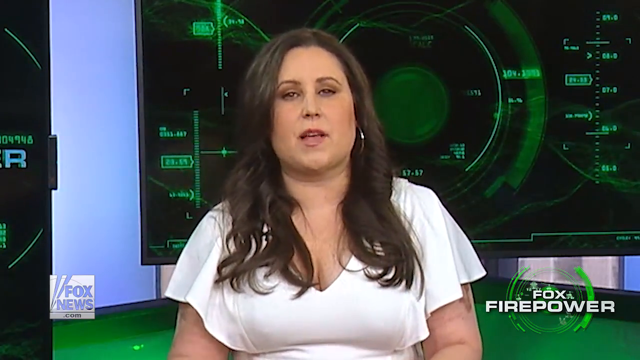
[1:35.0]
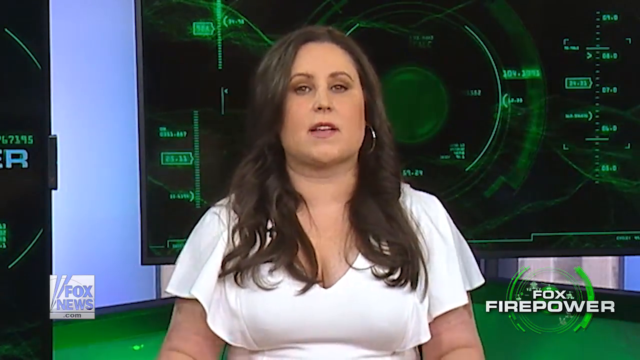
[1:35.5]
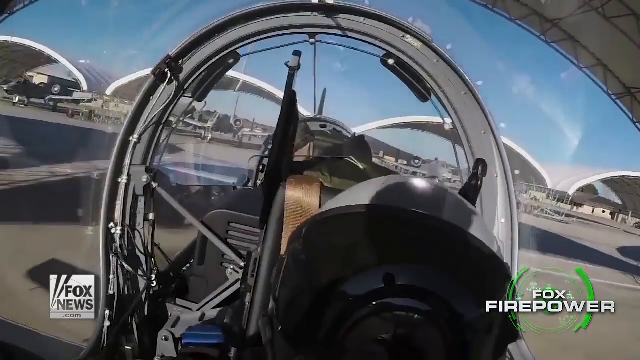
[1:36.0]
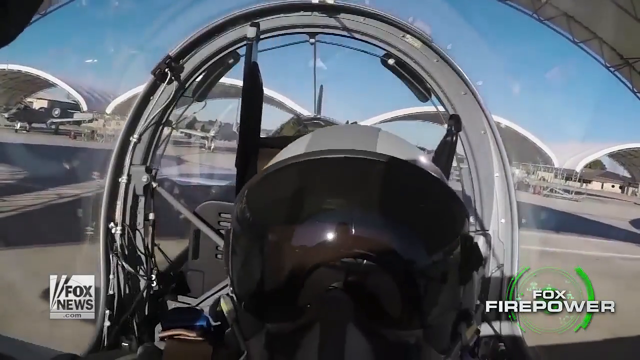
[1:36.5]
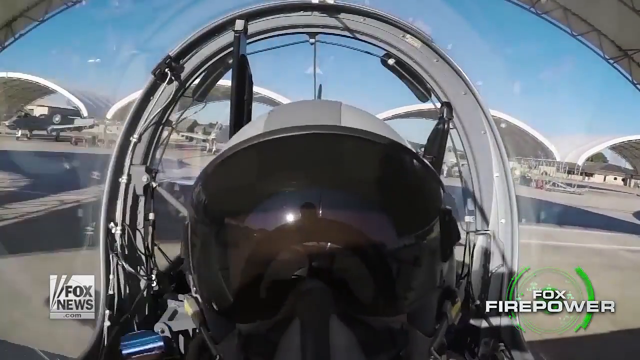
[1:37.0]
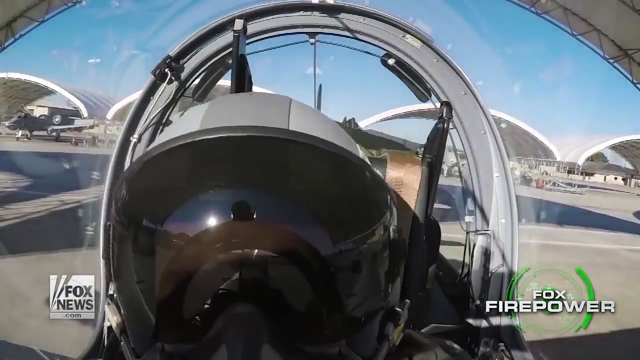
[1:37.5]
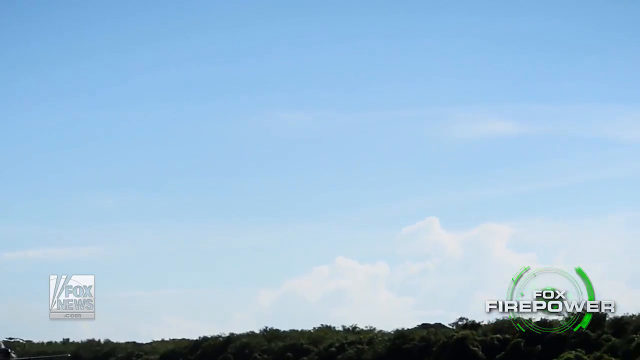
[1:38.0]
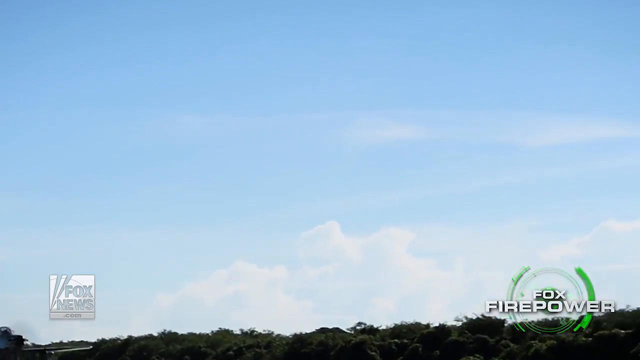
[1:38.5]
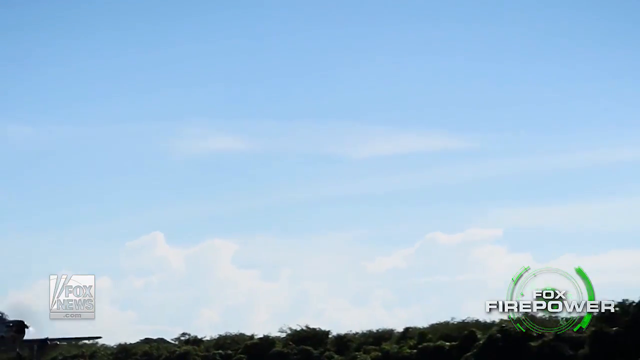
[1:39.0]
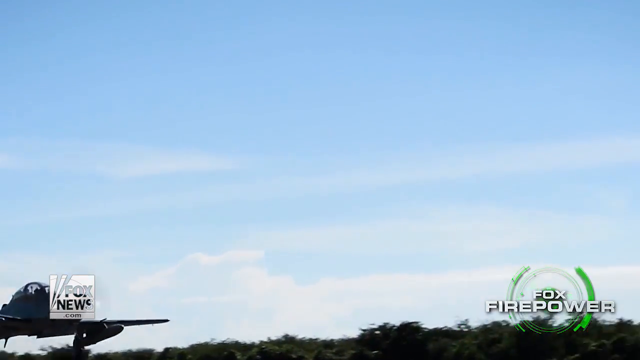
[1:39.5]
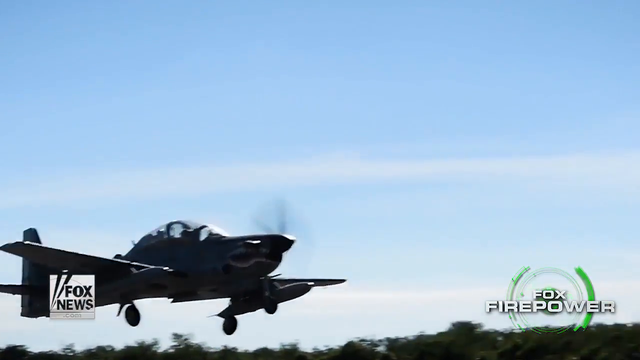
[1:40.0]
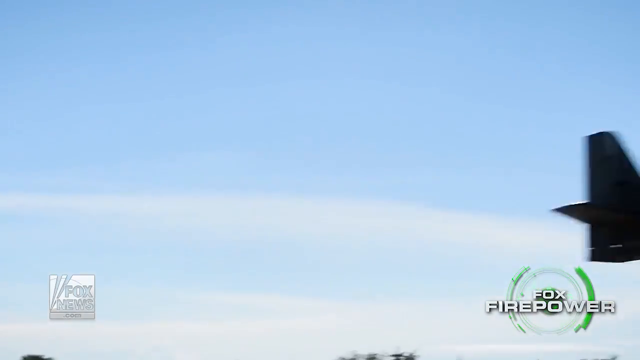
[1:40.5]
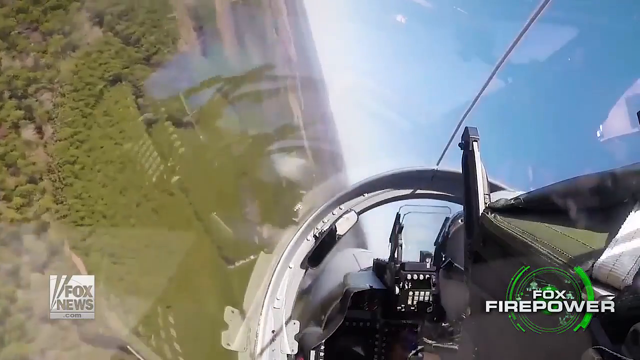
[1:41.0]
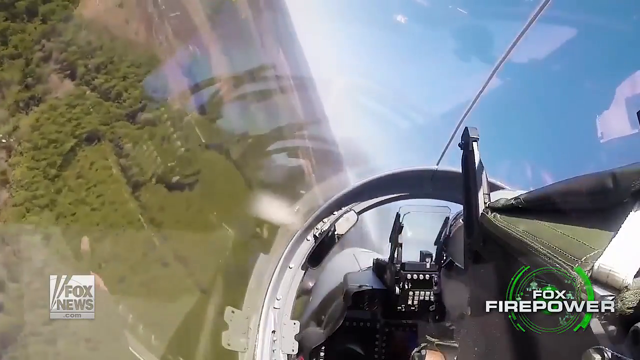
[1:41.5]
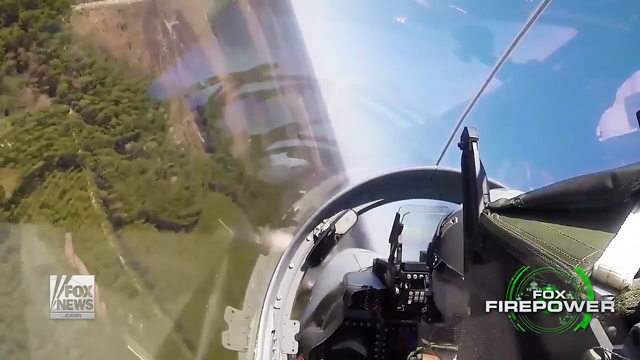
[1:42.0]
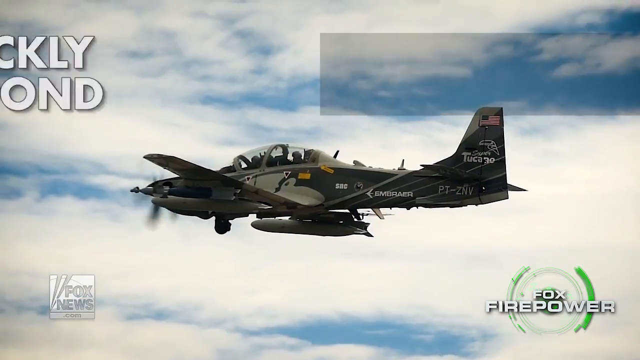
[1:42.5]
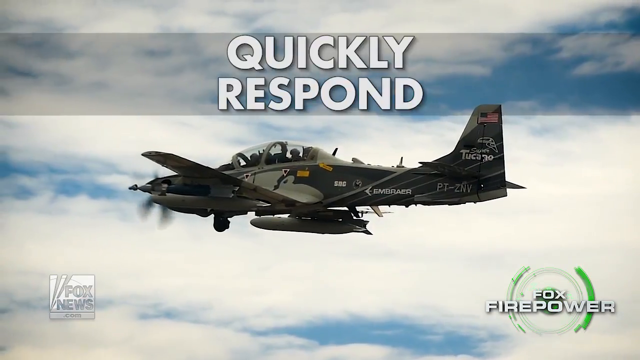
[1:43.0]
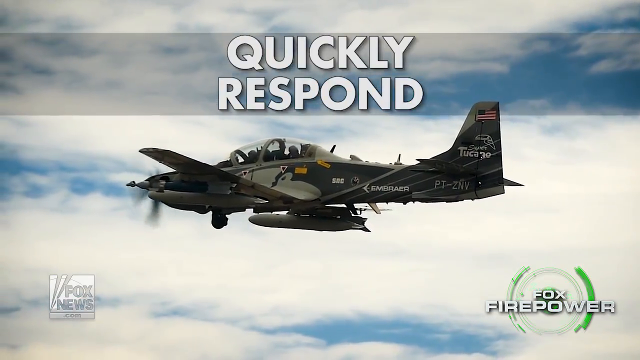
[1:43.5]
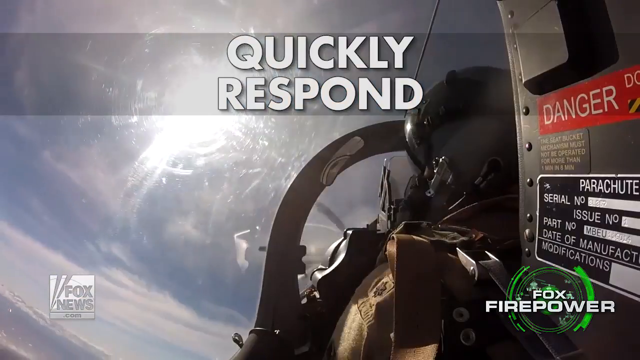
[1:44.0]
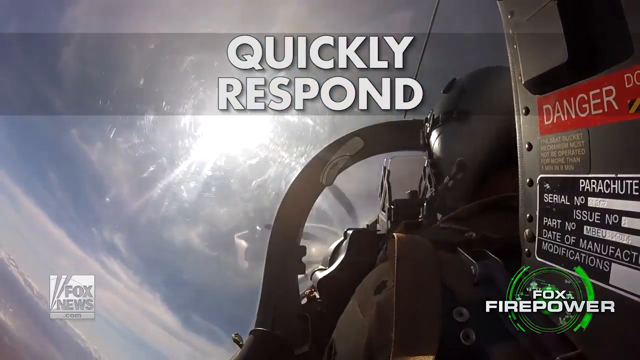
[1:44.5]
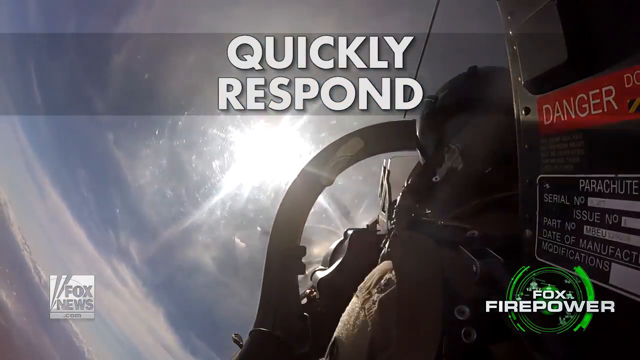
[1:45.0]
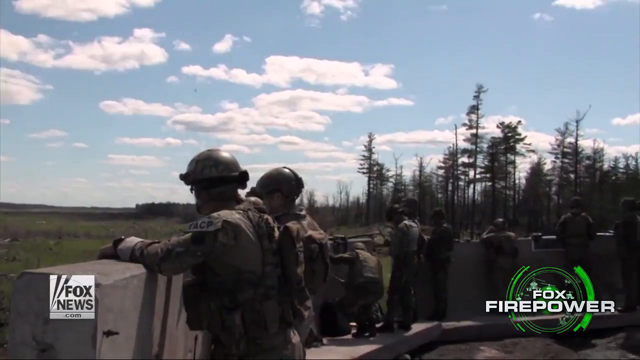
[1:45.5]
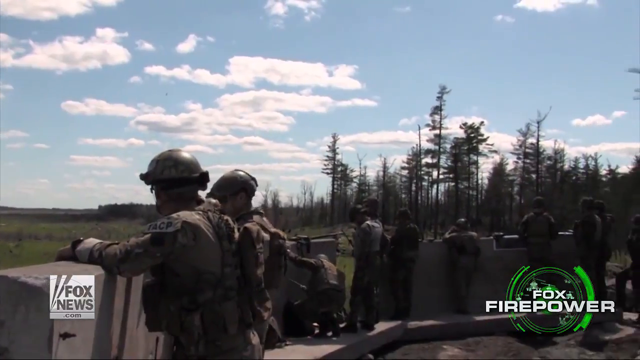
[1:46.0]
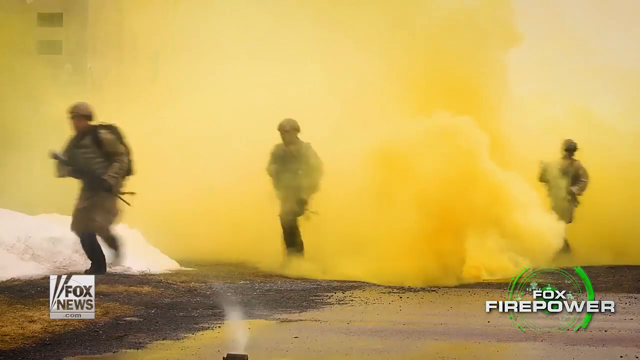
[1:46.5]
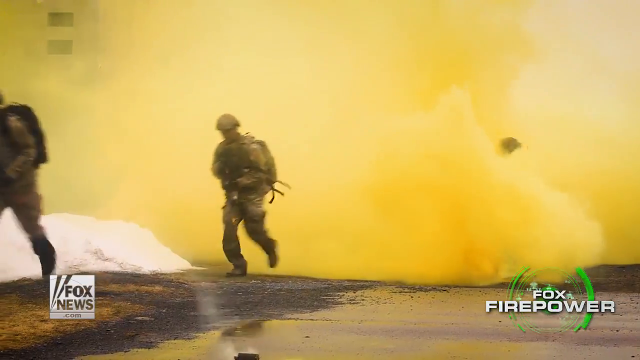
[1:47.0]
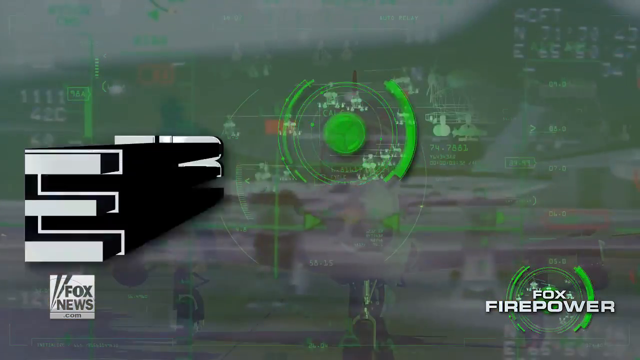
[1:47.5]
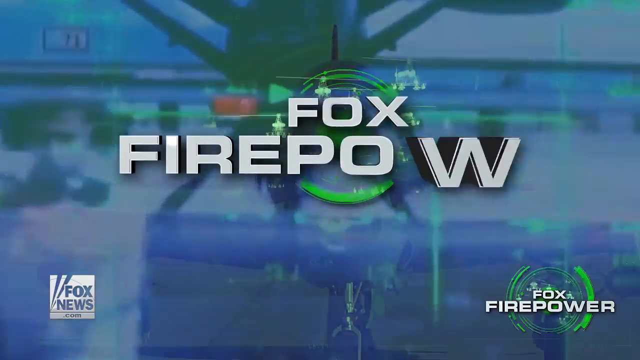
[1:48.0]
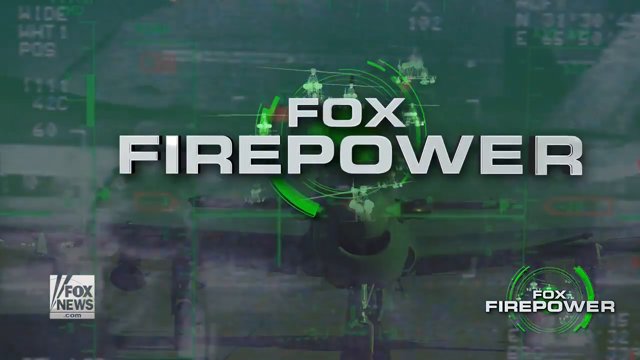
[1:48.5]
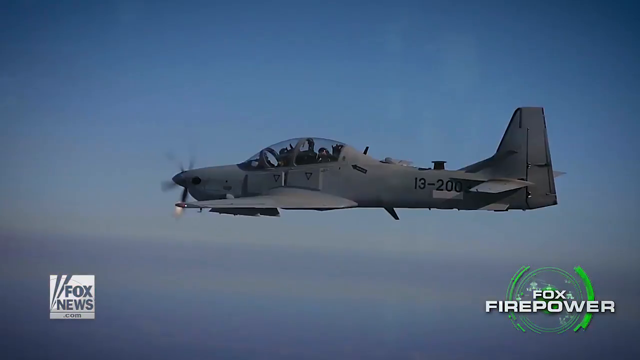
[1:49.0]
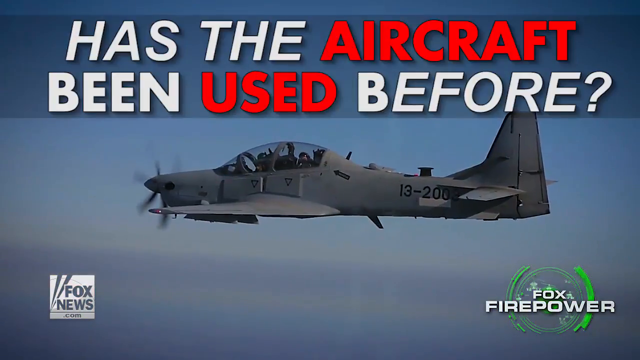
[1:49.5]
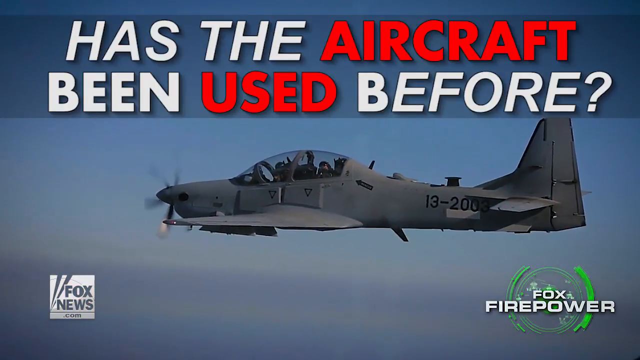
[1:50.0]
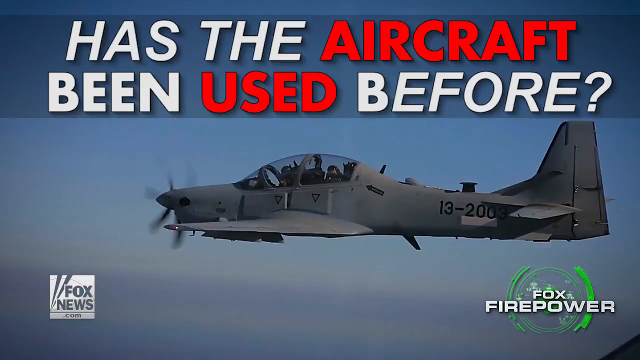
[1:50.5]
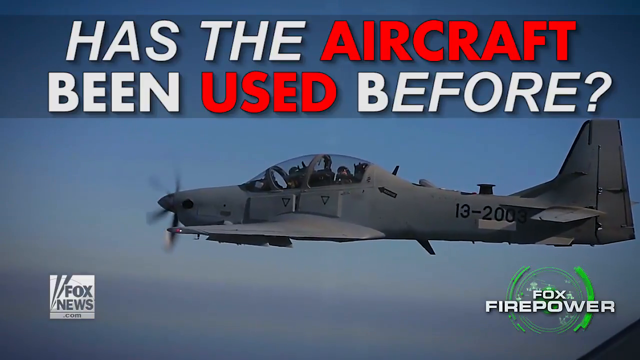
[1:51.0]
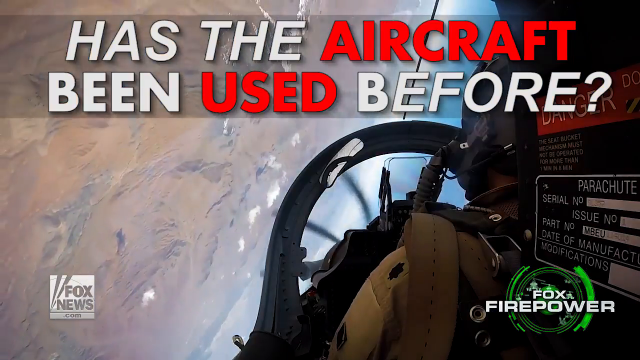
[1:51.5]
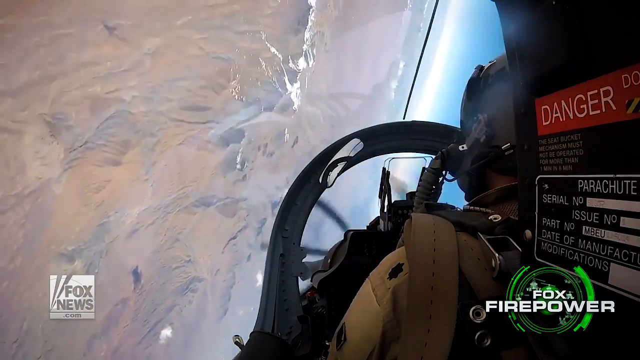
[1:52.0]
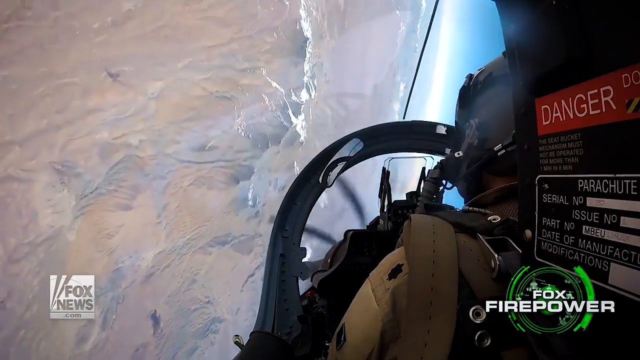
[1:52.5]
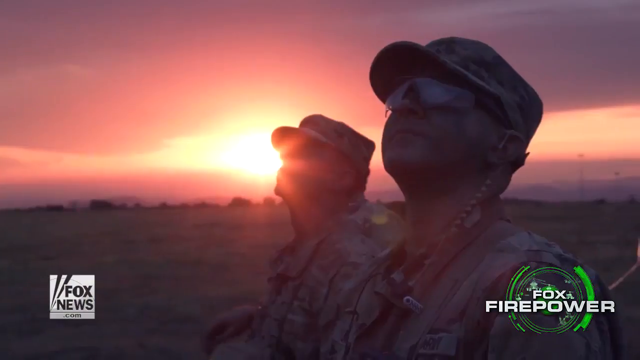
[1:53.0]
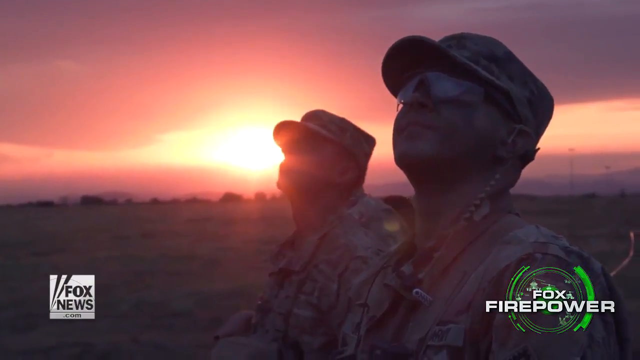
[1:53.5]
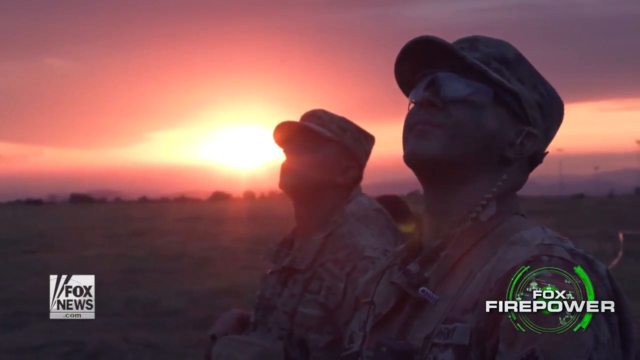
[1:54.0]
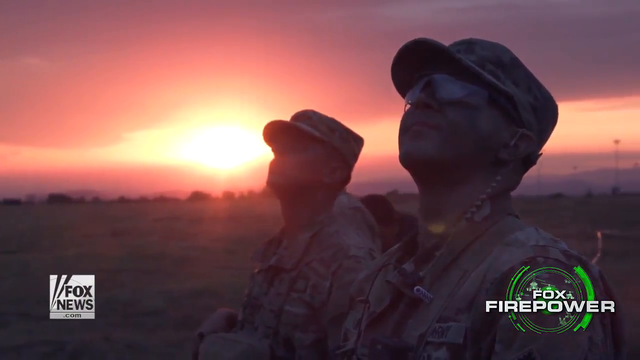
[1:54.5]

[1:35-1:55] The news reporter speaks in the studio, then a pilot flies a plane, followed by a pilot in another plane. A couple of soldiers walk toward the hospital direction, and the soldiers on the land communicate with the pilots in the planes. Parachutes appear as soldiers land, working together. A question pops up on the screen: "has the aircraft been used before?" The aircraft looks a little unrealistic, and the soldiers look like they are having a good experience.